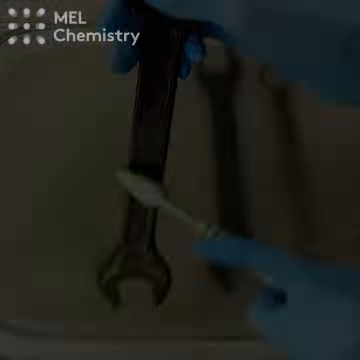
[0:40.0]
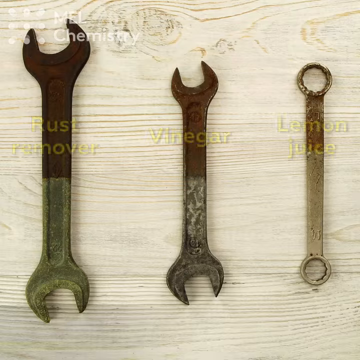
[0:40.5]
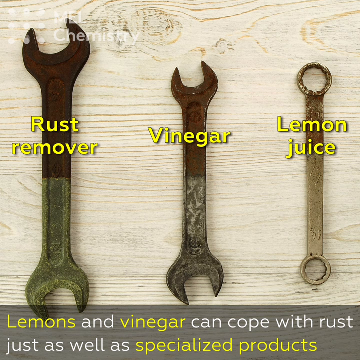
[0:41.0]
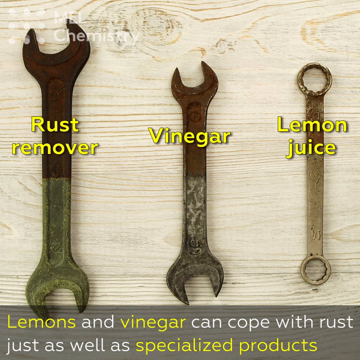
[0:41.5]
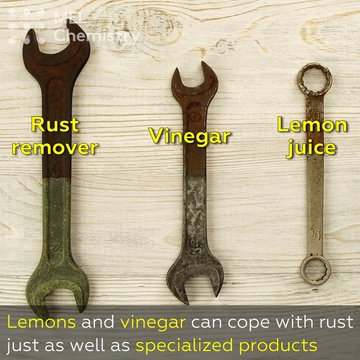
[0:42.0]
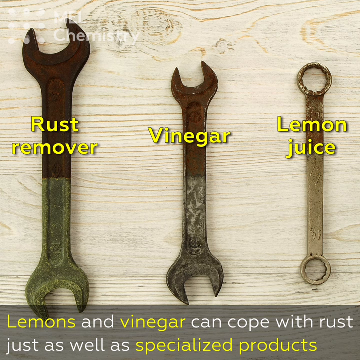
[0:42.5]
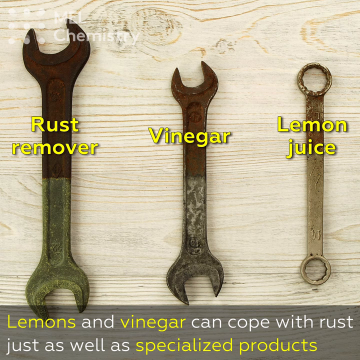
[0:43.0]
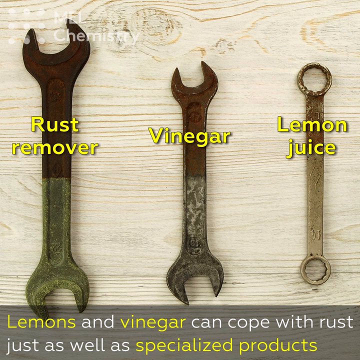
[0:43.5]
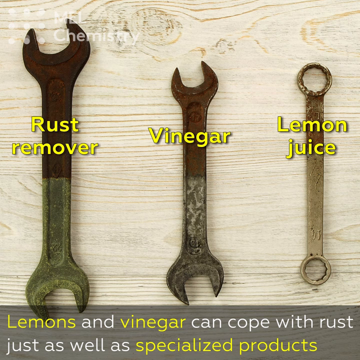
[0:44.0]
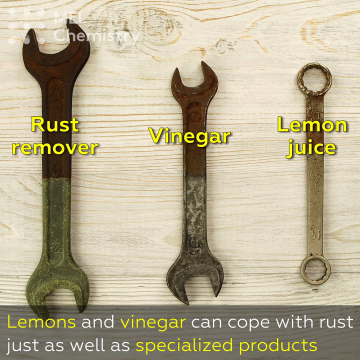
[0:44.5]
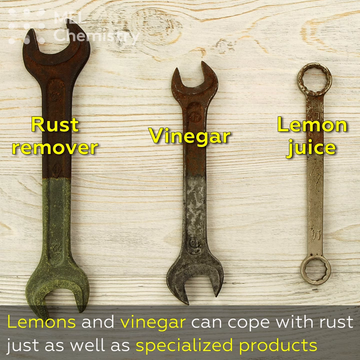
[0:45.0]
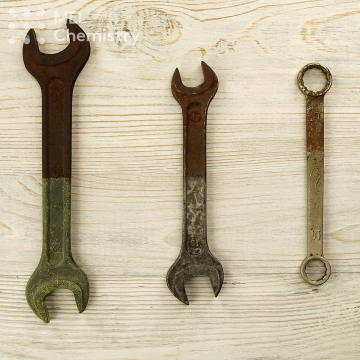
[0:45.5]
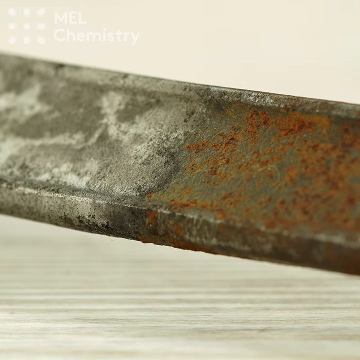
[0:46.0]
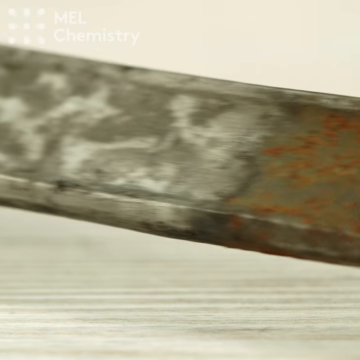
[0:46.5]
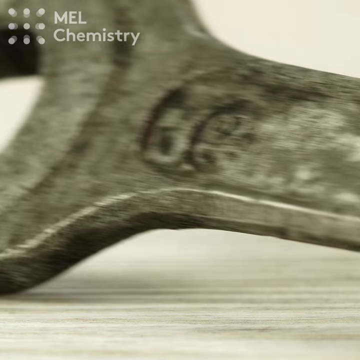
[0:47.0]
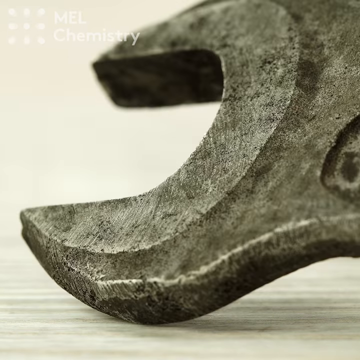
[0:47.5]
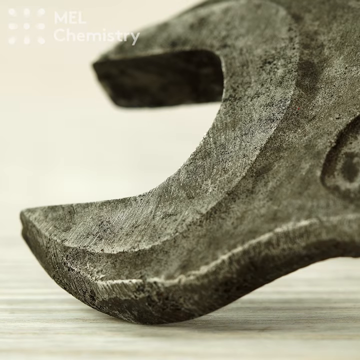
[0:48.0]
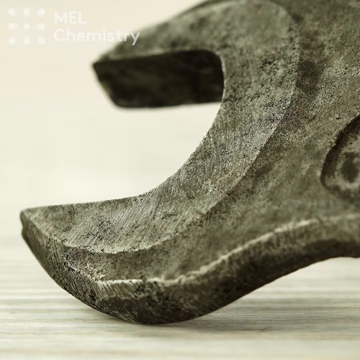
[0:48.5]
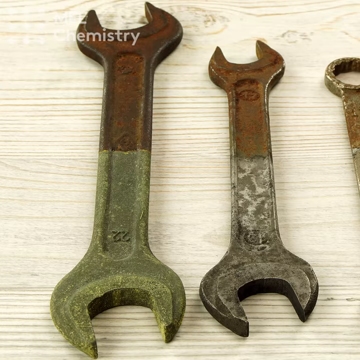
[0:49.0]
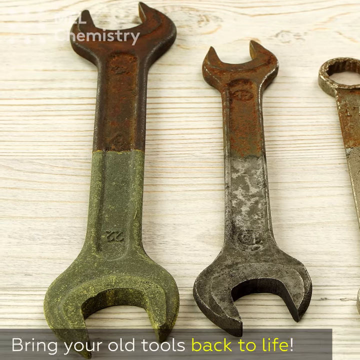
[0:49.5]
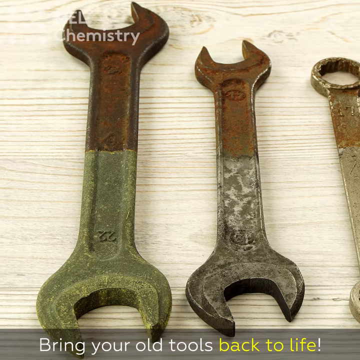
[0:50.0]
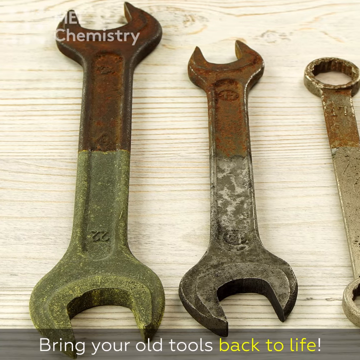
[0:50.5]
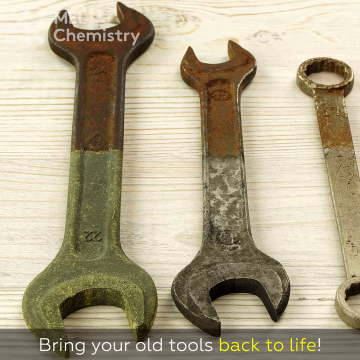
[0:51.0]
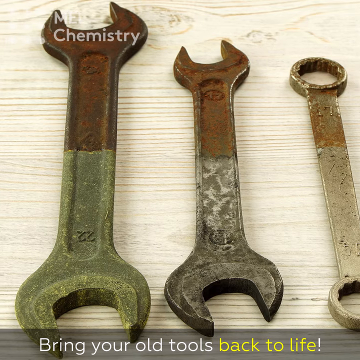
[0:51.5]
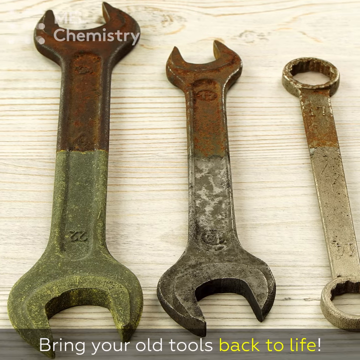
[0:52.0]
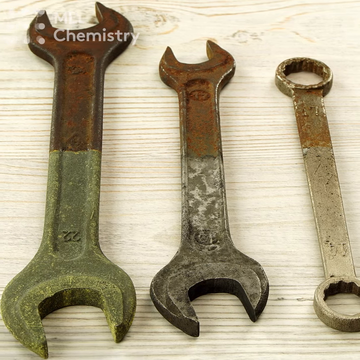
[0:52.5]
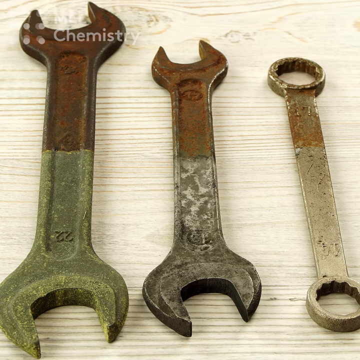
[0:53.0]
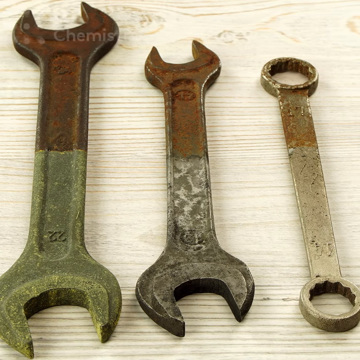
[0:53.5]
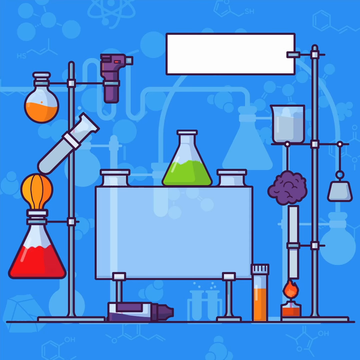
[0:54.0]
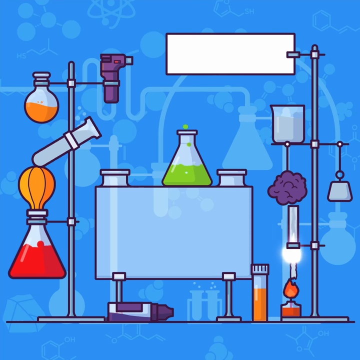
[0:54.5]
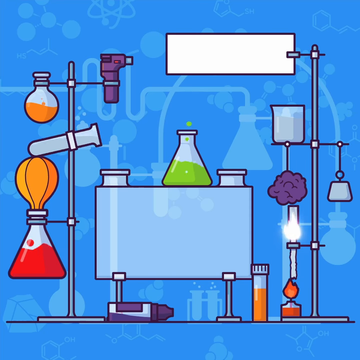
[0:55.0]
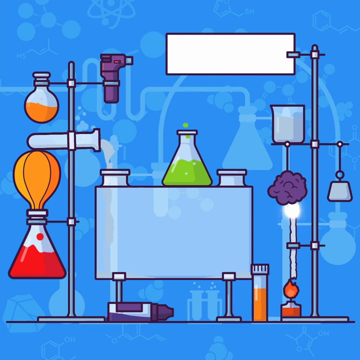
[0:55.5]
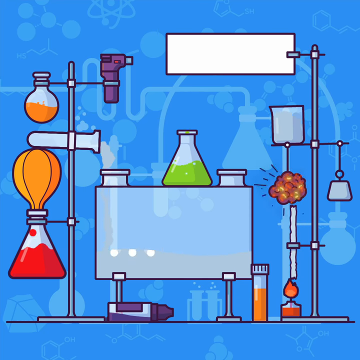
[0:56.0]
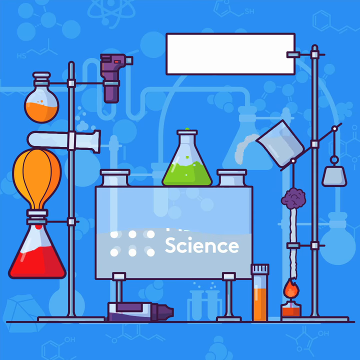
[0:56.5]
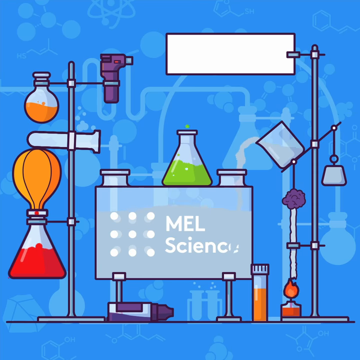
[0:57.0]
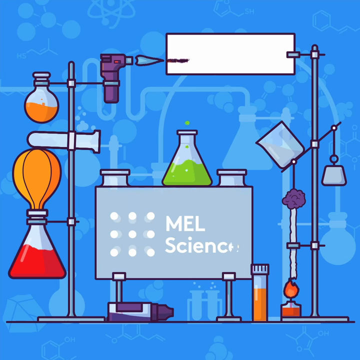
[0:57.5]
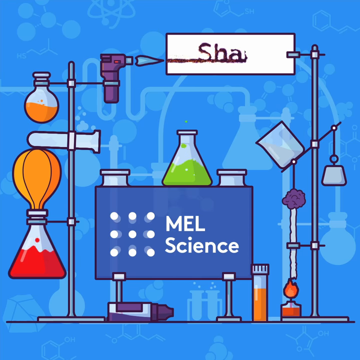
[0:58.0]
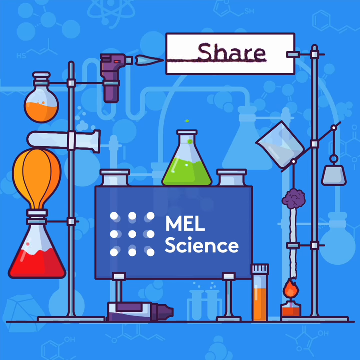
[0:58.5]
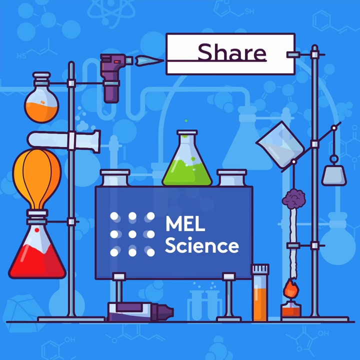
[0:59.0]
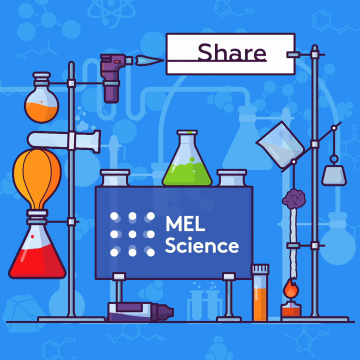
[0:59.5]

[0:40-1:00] The wrenches are now dry and removed. The first liquid turns out to be rust remover, which seems to have worked best; the second was vinegar, which worked decently; and the third was lemon juice, which also worked okay. The rust remover apparently cost a dollar and the other two solutions 50 cents each. A small animation follows with text reading "lemons and the vinegar can cope with the rust just as well as specialized products." All three seem to be pretty successful. Near the end, a close-up of the objects laying on a piece of wood shows them as pretty much raw, clean metal; they do not look brand new, but they look clean and free of rust. Text reads "bring your old tools back to life." At the end, a simple animated design drawing of a laboratory with moving parts appears, with "metal chemistry" at the top, apparently a short outro animation showing a few things and various parts, almost like a Rube Goldberg machine.